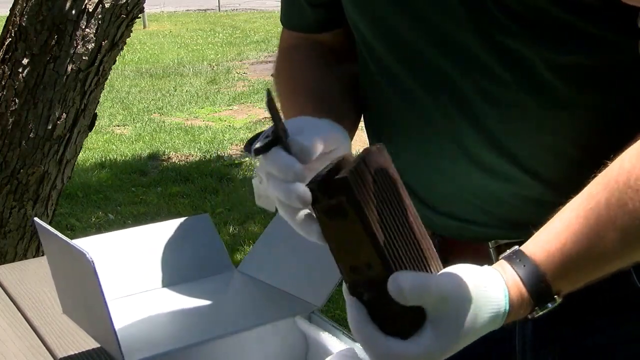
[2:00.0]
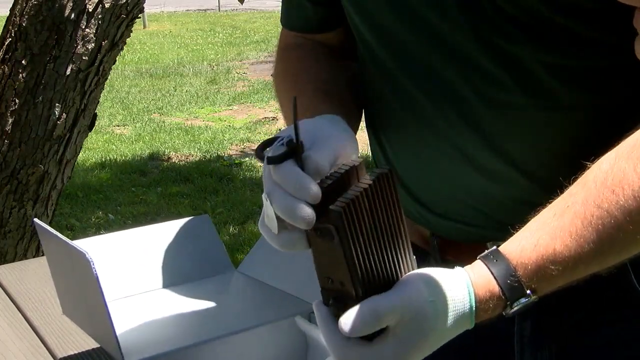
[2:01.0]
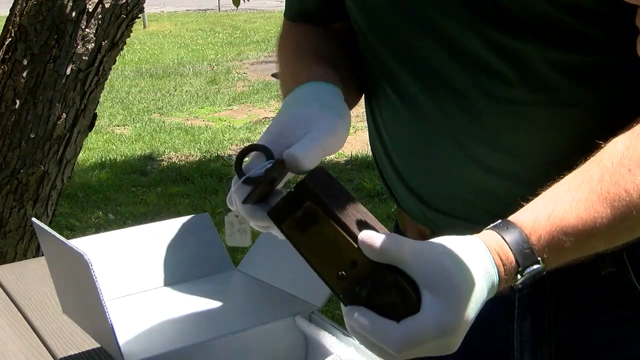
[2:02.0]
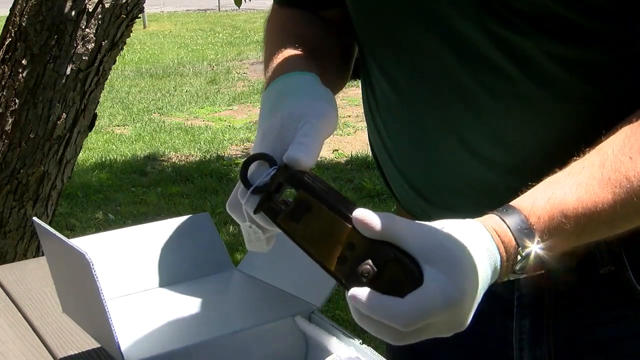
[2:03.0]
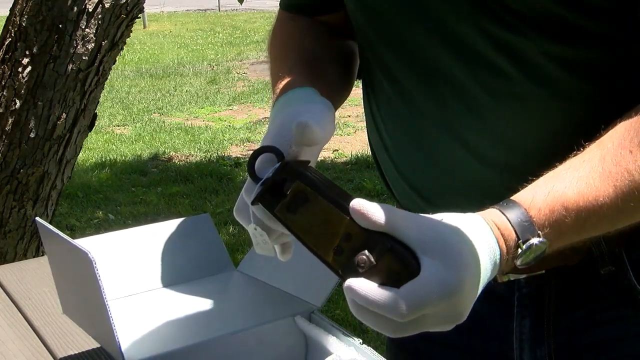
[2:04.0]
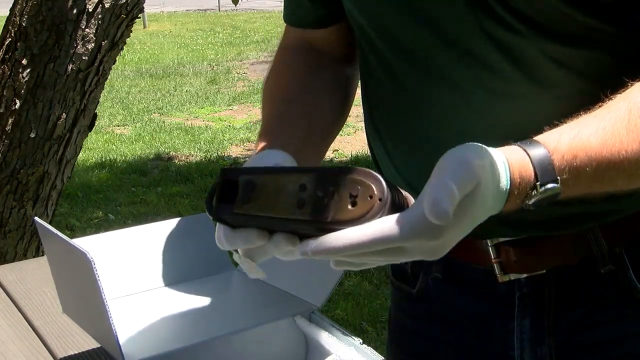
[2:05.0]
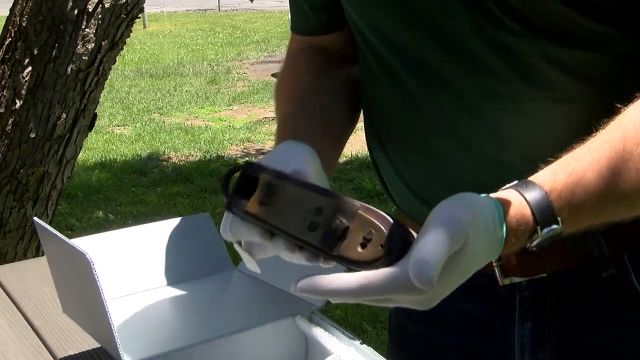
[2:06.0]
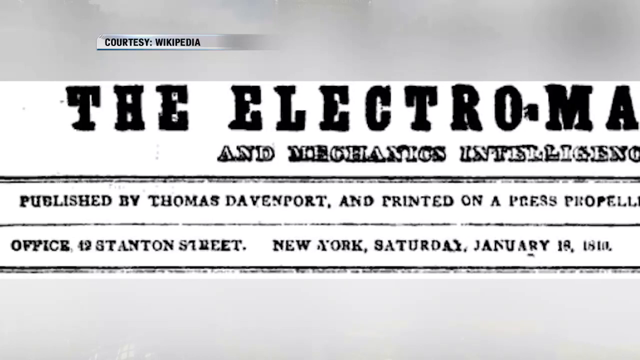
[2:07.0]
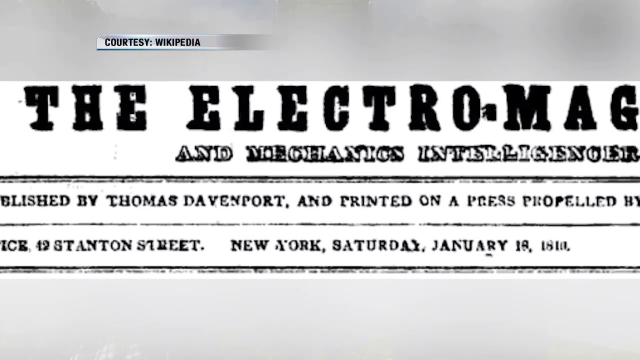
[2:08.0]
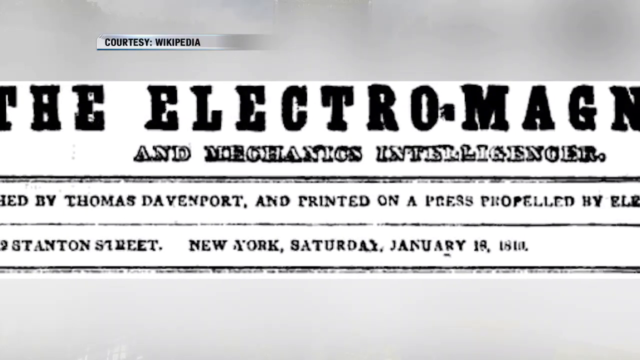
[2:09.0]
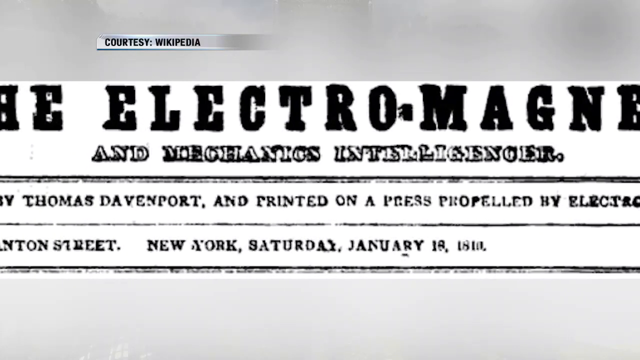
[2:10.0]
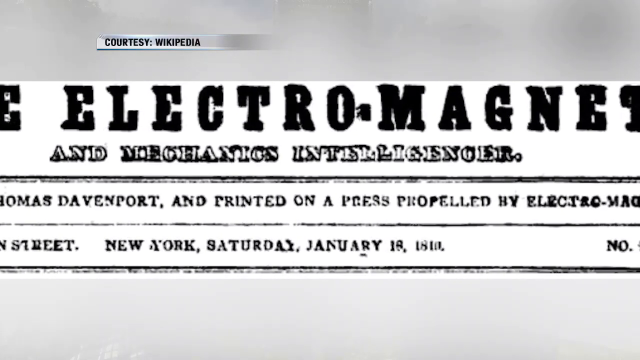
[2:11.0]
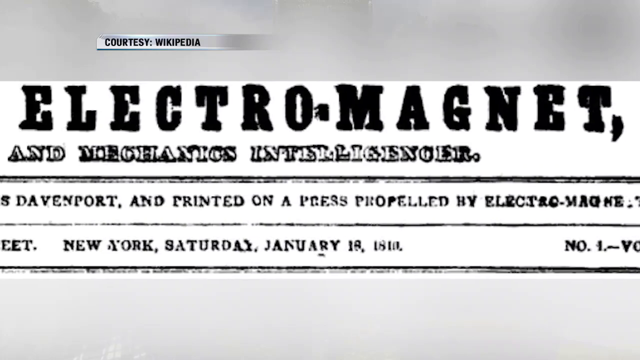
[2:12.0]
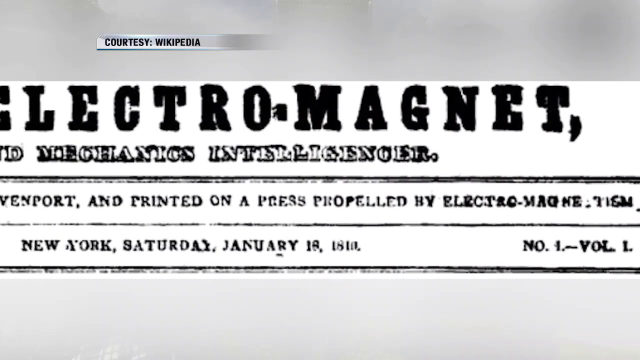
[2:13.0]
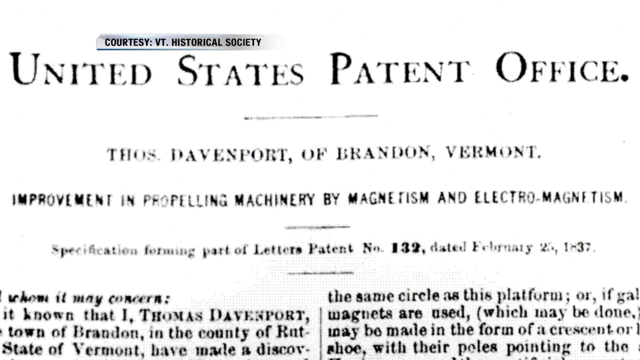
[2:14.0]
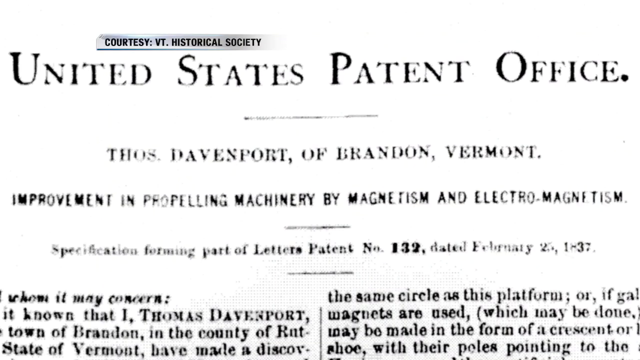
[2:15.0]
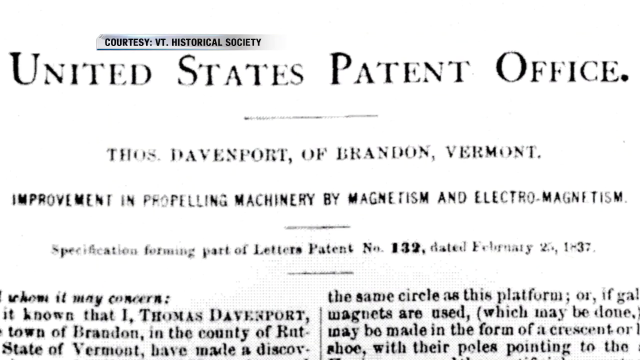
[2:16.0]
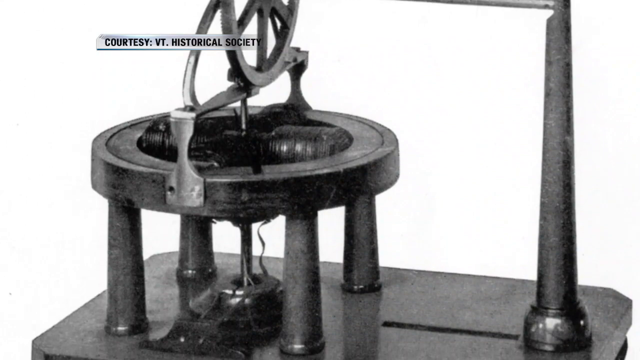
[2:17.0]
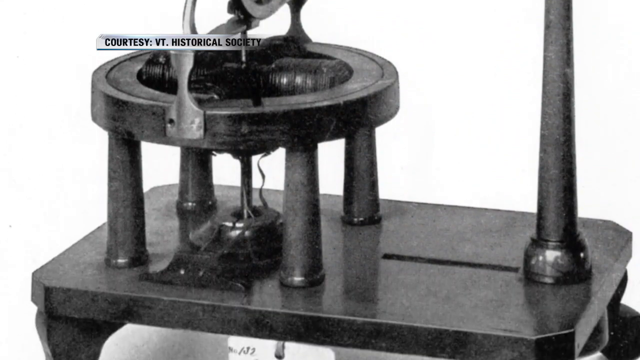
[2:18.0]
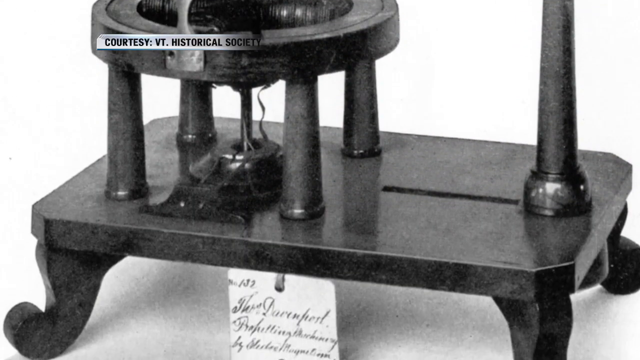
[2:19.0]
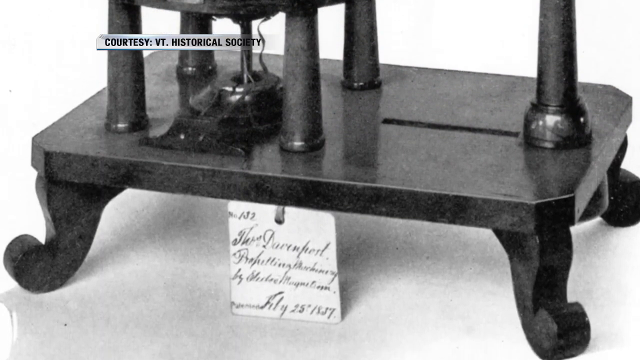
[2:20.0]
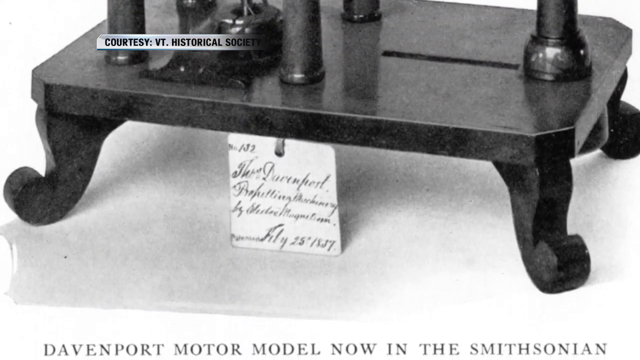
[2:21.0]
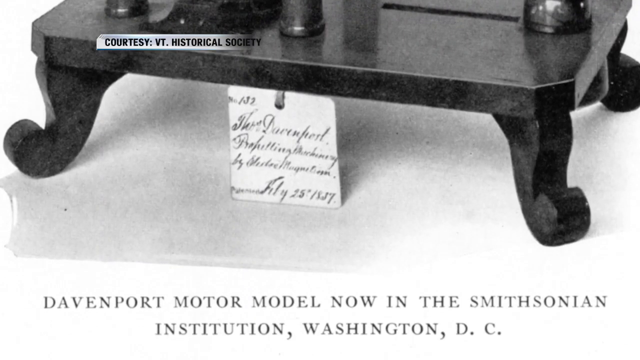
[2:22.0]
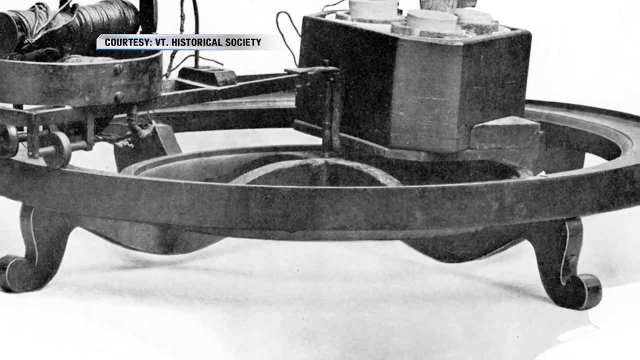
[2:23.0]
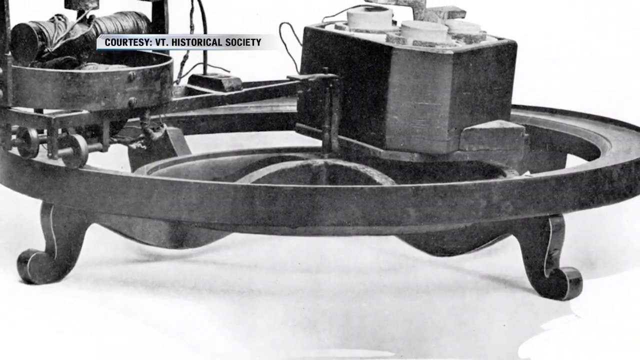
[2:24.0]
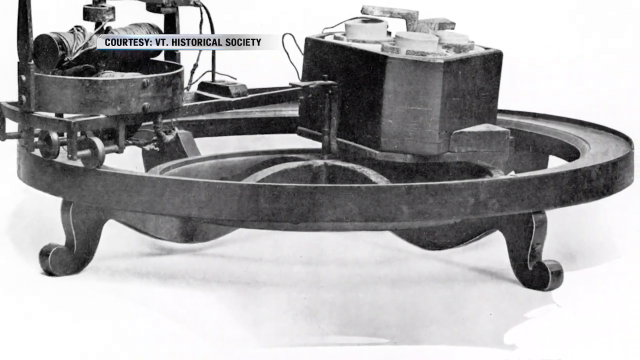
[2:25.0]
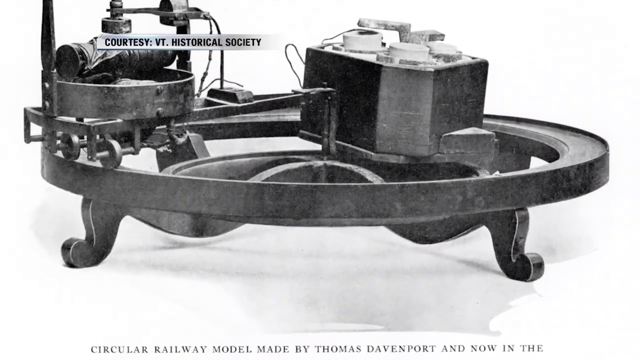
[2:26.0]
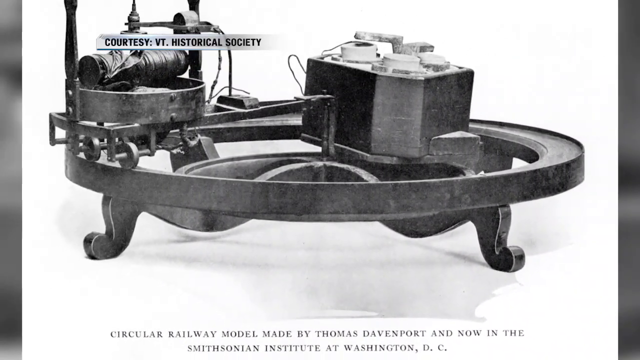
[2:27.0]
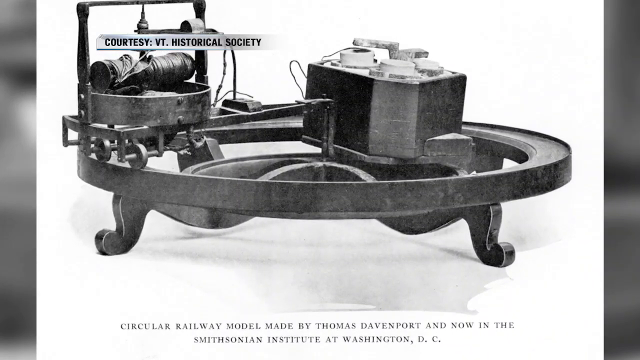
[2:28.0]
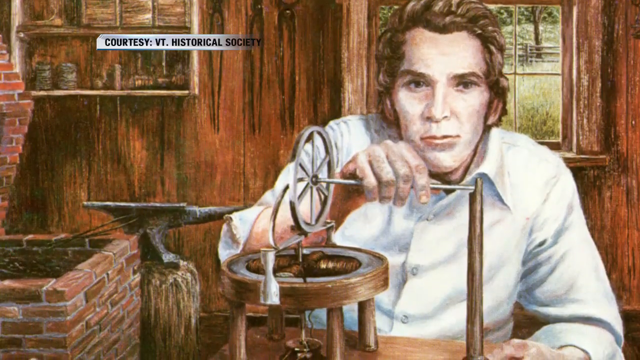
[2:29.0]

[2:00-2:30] A man holds a piece of metal that looks like plates stacked and bolted together. In his other hand he has another piece that seems to be another plate with a handle on it, which attaches to the part he holds in his left hand, and he kind of wiggles it around in his hands. The video cuts to an image of black text on white, kind of like paper or a strip of paper, reading "the electromagnet". Then a piece of paper reading "United State Patent Office" is shown, with a little text underneath. The video cuts to a black-and-white image of what looks like a metal plate with a concoction on top of it, with electrical wires wrapped around what are apparently magnets, a disc, and four legs attached to the plate underneath. It looks like an old electromagnet, showing how they used to look.